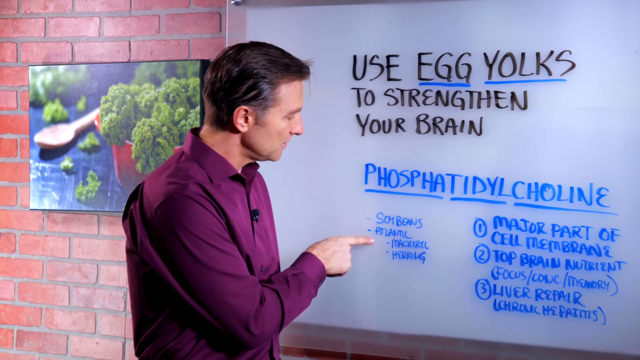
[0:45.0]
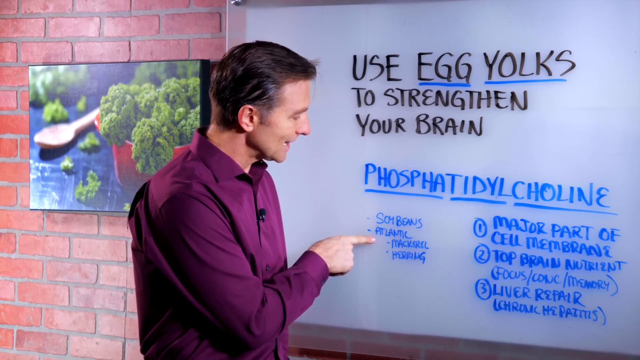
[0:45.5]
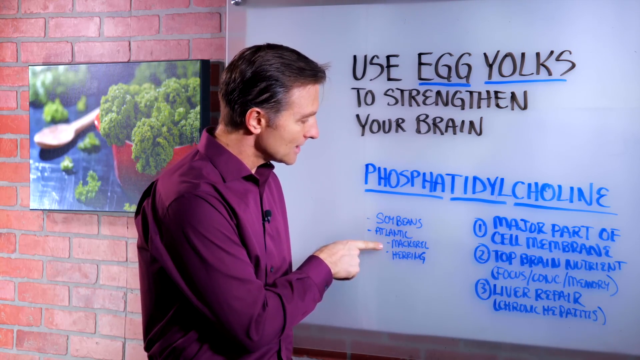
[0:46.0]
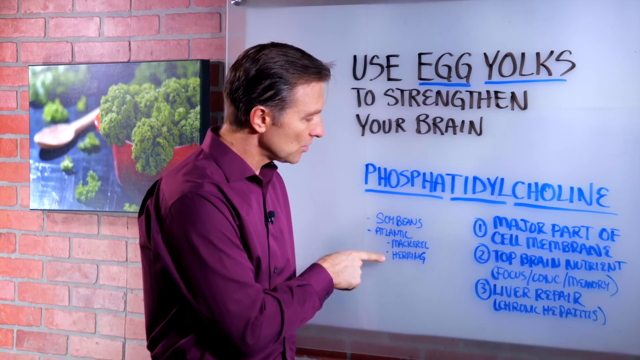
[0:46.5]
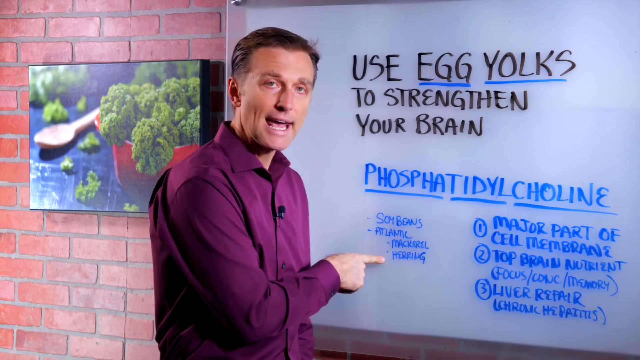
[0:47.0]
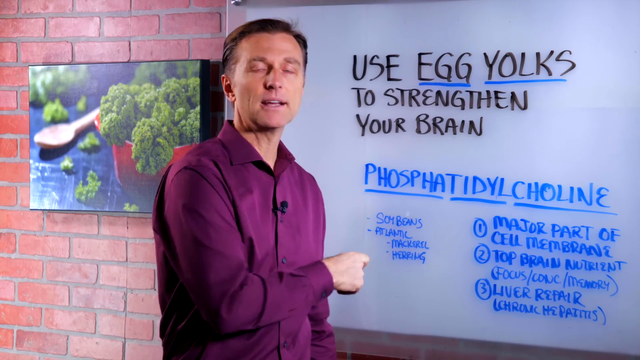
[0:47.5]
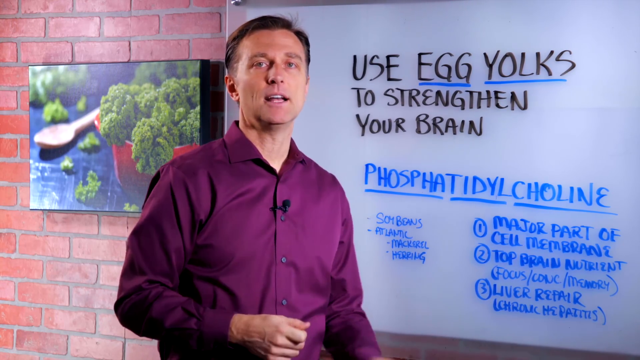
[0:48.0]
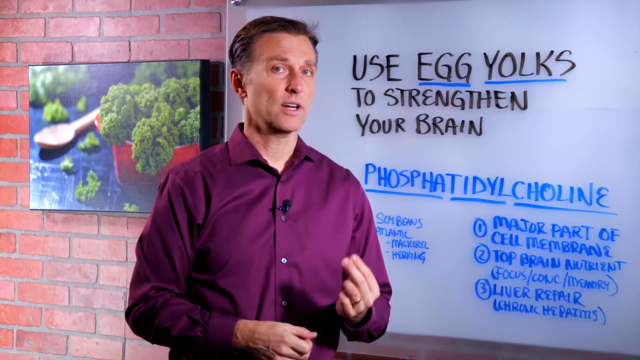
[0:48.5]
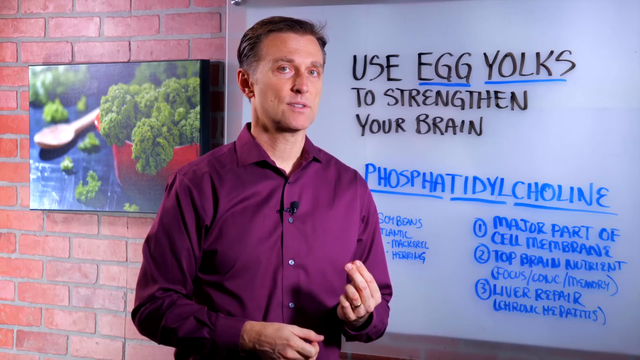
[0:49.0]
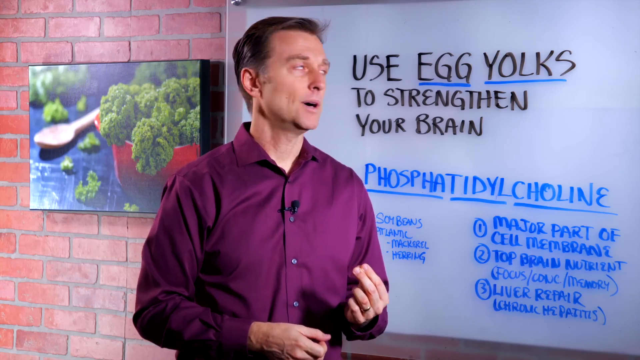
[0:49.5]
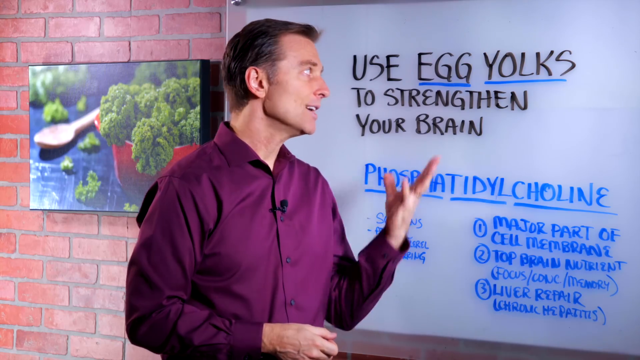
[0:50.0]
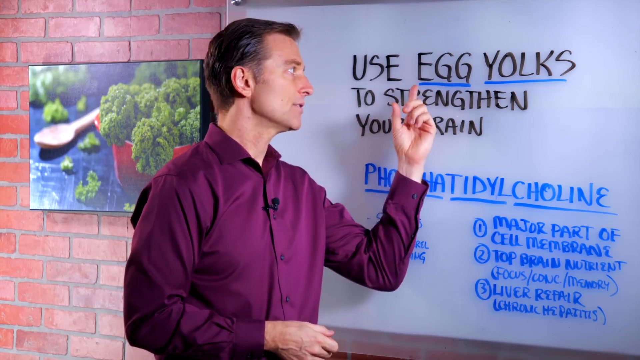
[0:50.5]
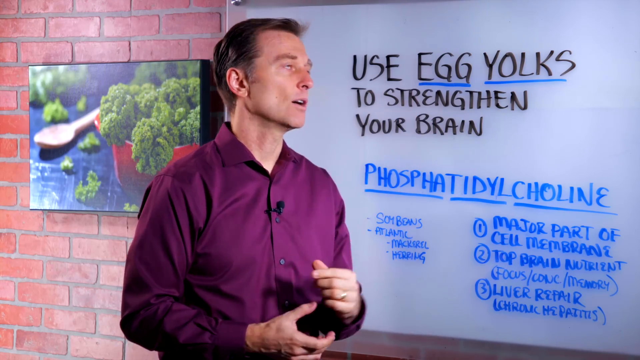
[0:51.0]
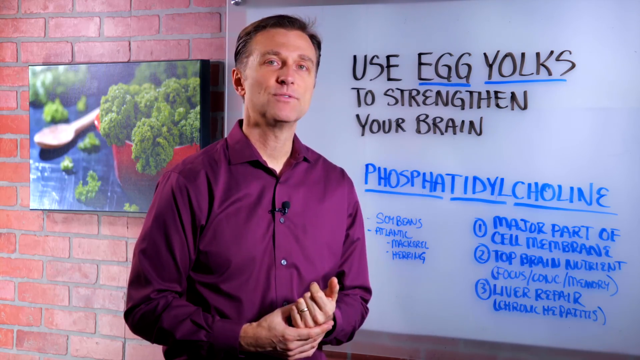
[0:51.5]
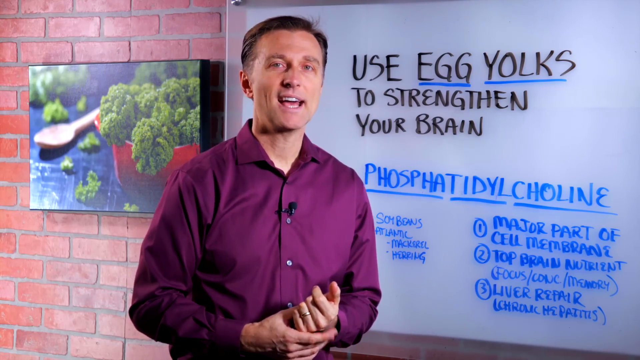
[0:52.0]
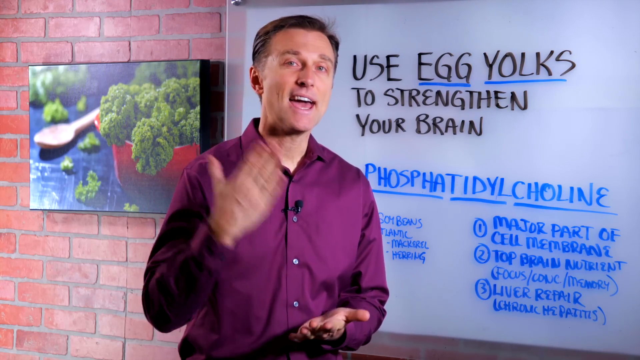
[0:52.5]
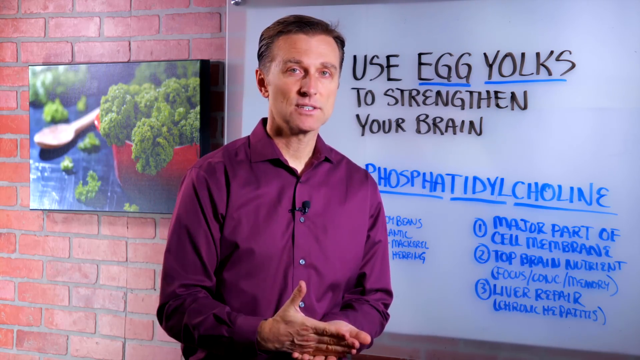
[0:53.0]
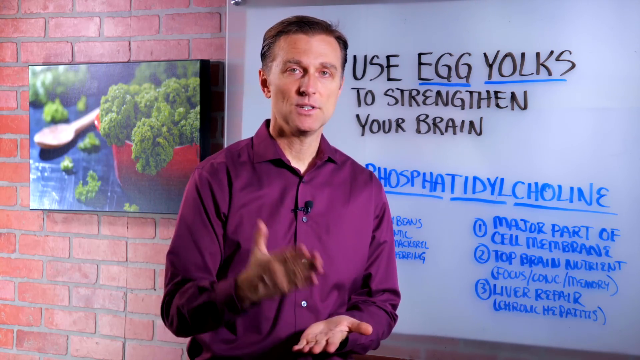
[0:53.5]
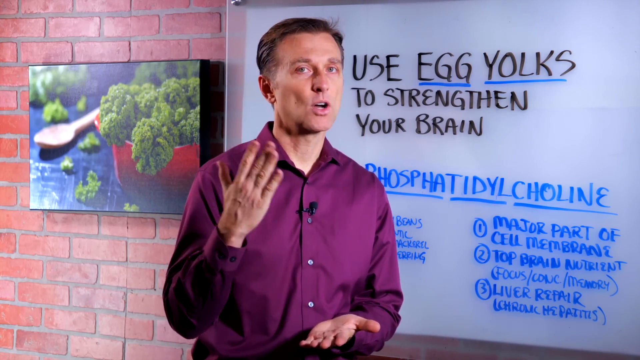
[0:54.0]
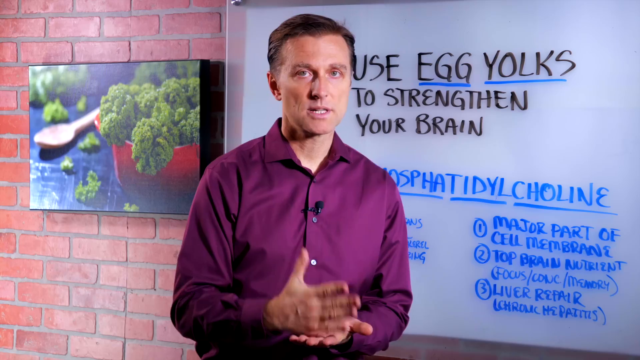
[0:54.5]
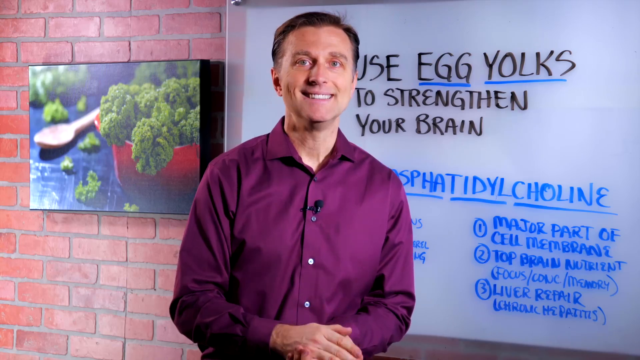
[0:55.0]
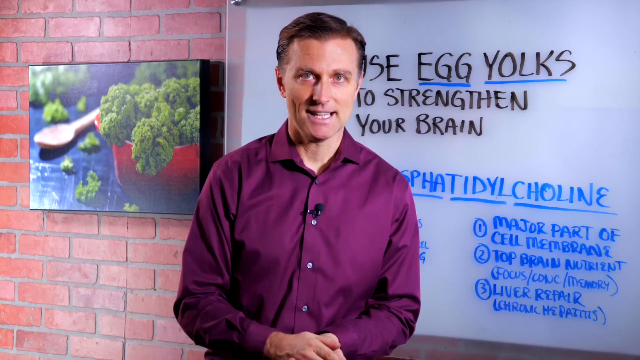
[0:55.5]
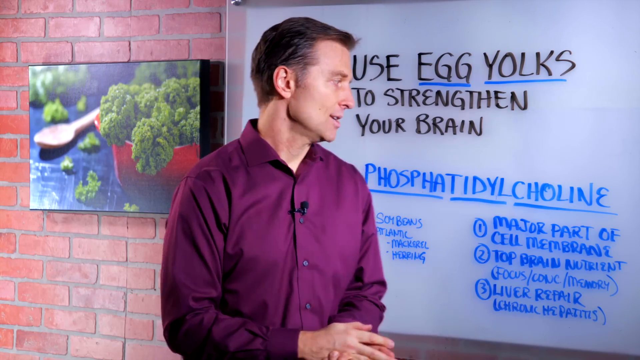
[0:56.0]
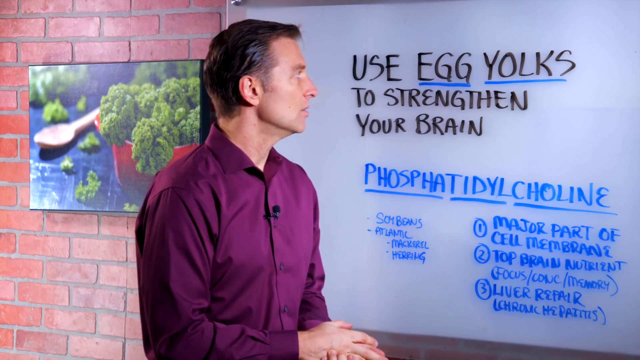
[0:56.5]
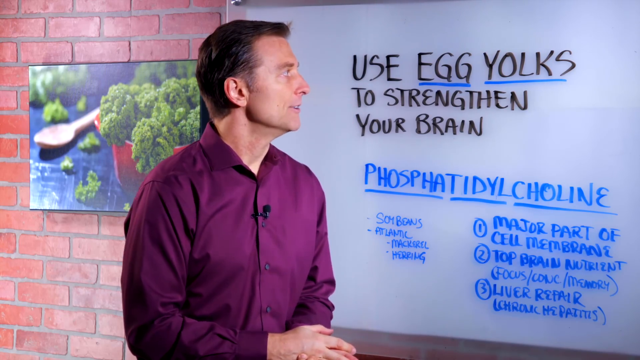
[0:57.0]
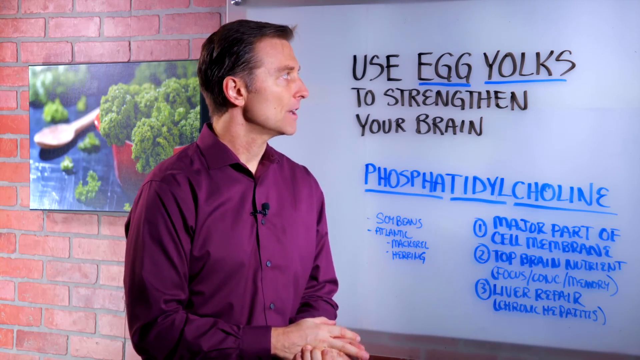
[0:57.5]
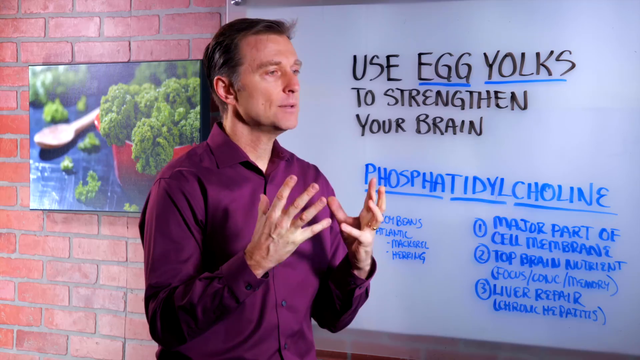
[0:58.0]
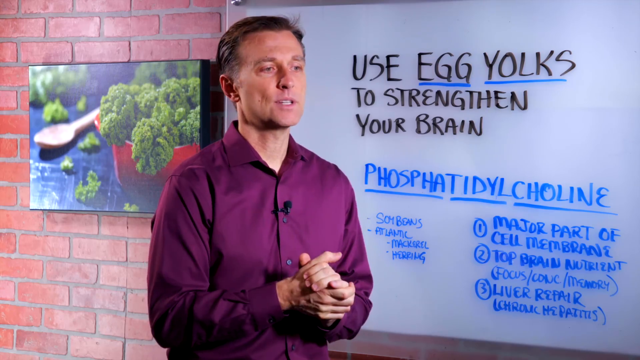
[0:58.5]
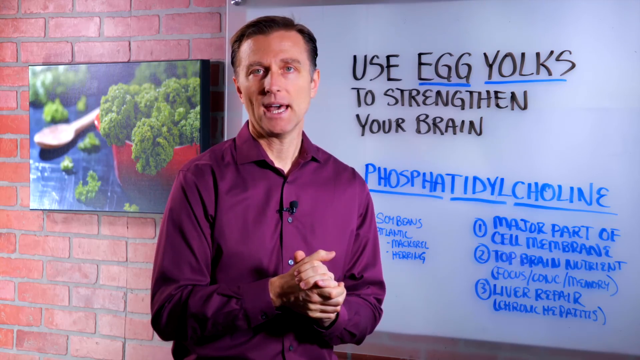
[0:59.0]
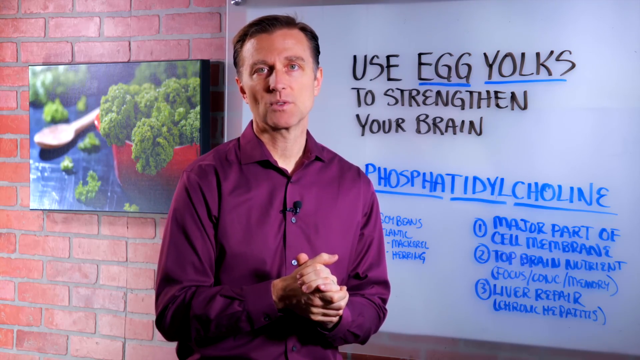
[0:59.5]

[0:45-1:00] A white Caucasian man with dark hair and a slightly tan, reddish complexion lectures in front of a dry-erase board. He appears to be in his 40s, around 45 years old. He wears a magenta or purple button-down shirt with a clip-on mic on it. The setting is some sort of instructional center, with a dry-erase board and a photo of broccoli on the wall. The entire scene stays on the man lecturing in front of the dry-erase board.